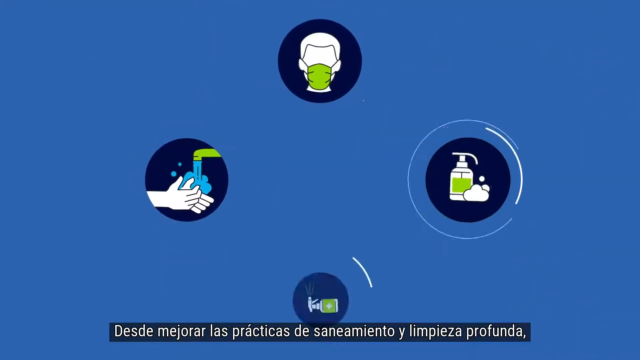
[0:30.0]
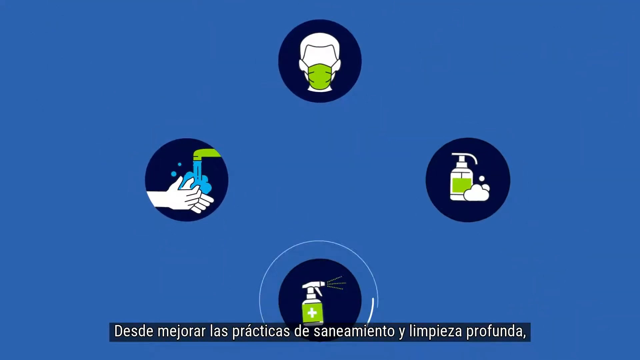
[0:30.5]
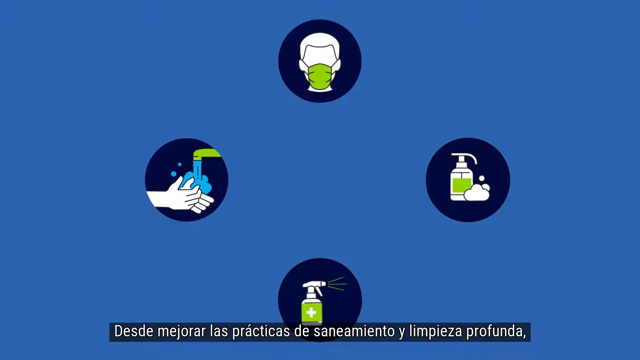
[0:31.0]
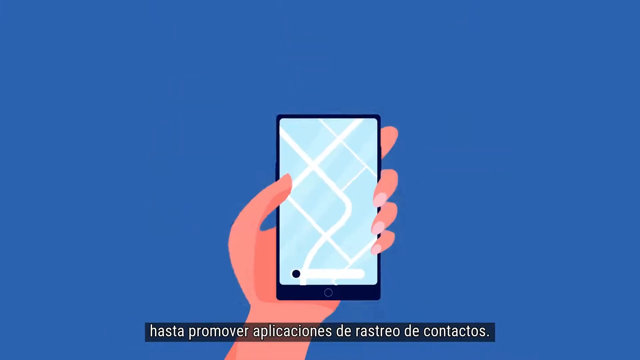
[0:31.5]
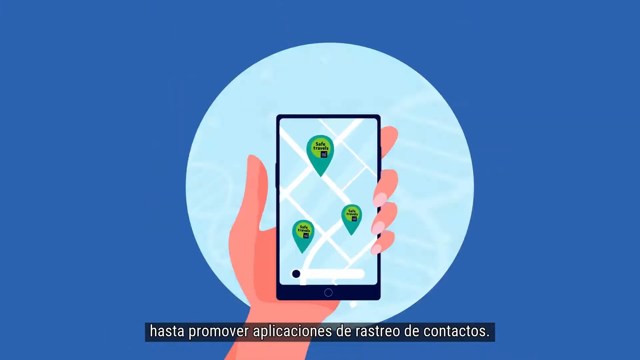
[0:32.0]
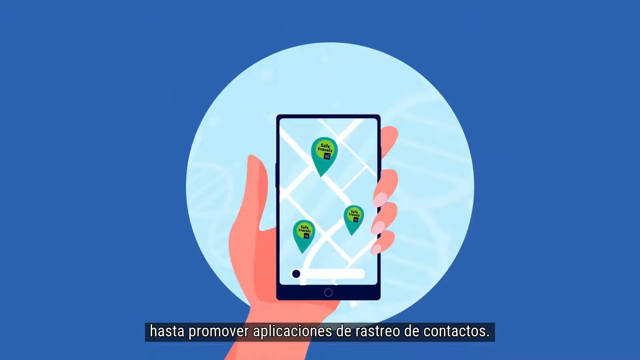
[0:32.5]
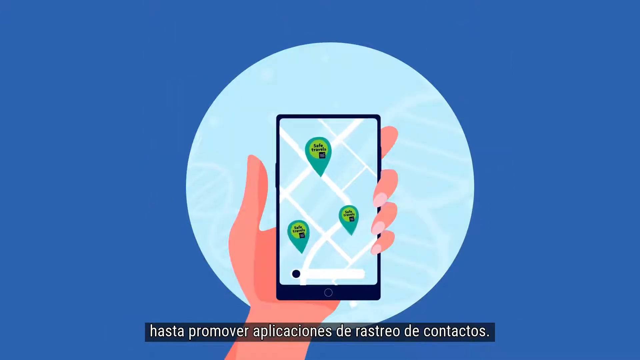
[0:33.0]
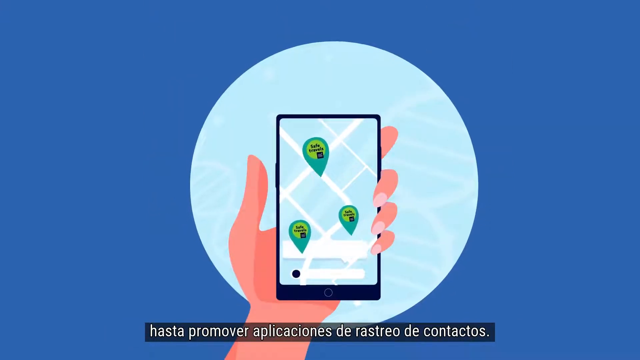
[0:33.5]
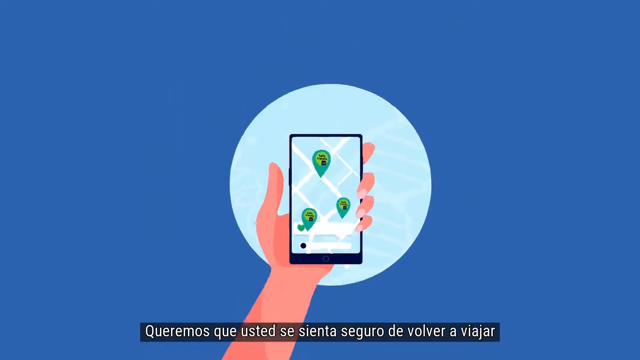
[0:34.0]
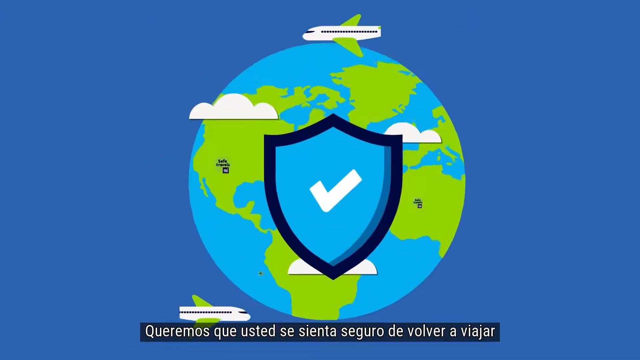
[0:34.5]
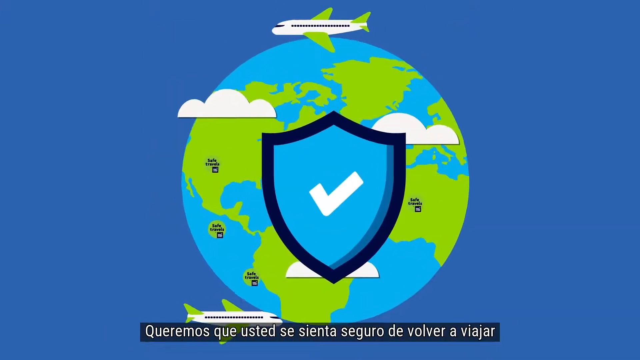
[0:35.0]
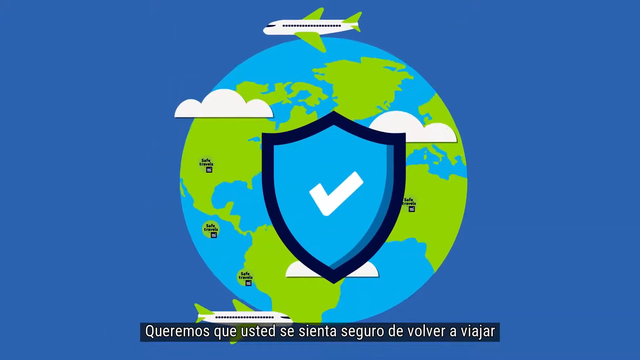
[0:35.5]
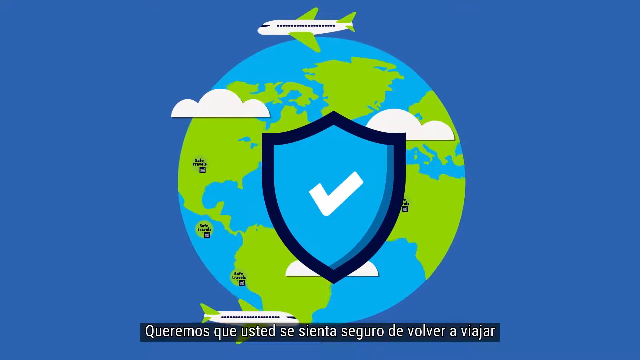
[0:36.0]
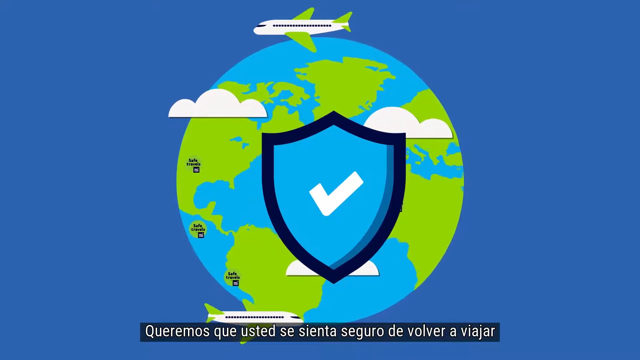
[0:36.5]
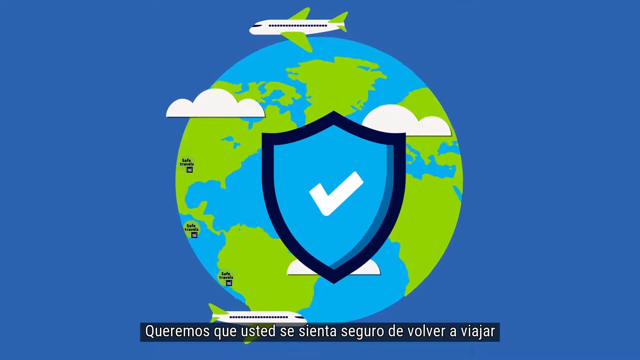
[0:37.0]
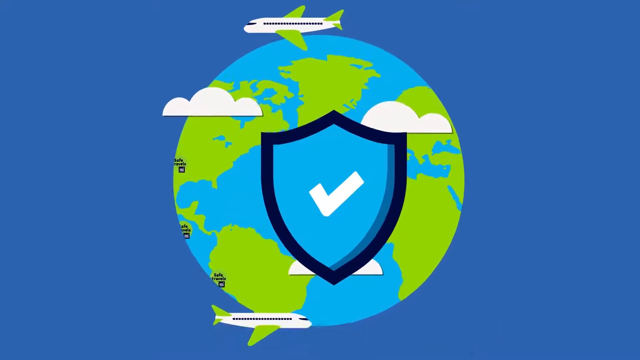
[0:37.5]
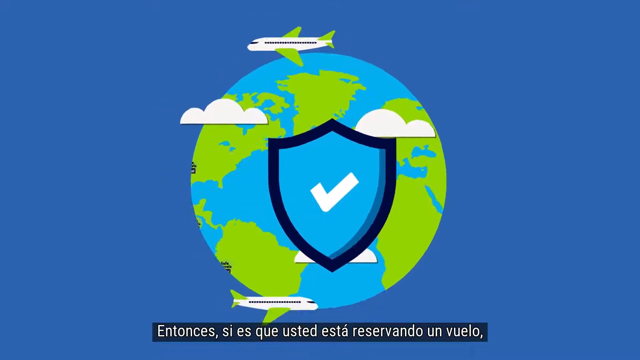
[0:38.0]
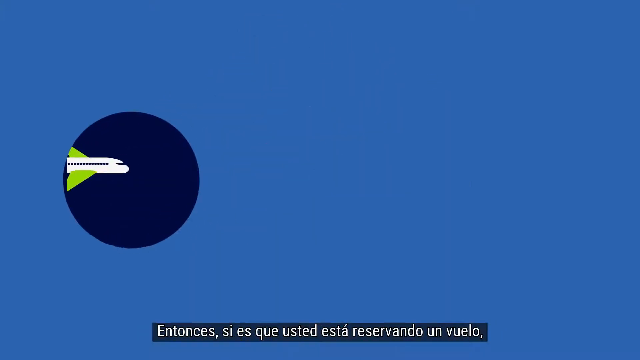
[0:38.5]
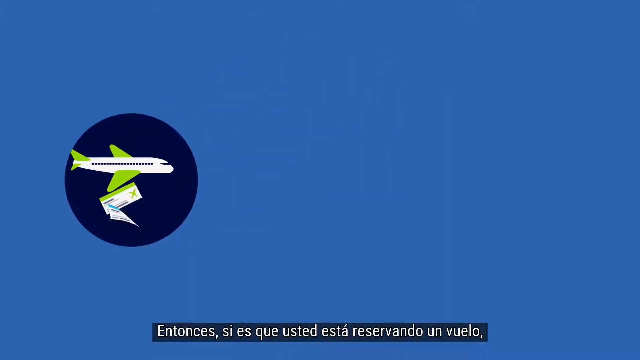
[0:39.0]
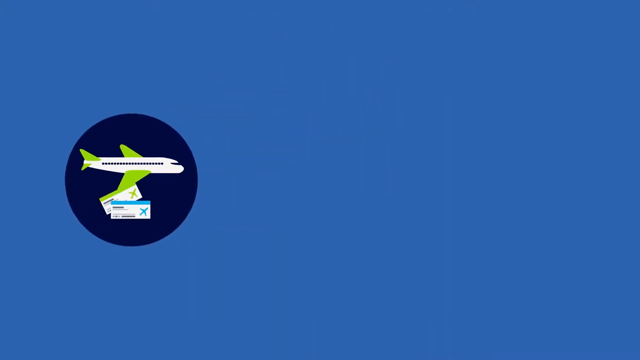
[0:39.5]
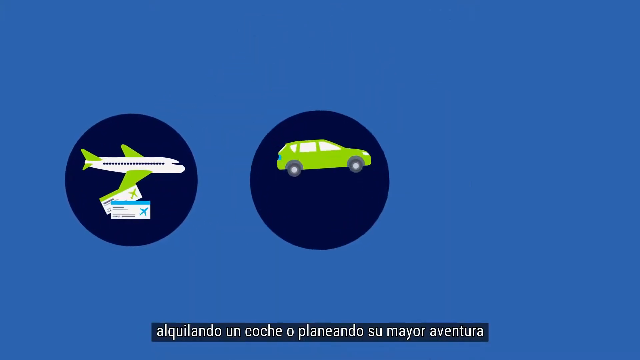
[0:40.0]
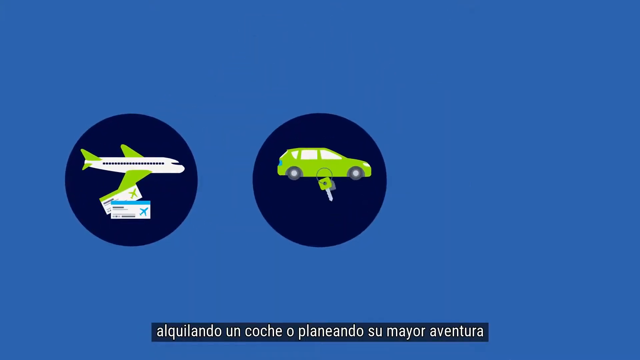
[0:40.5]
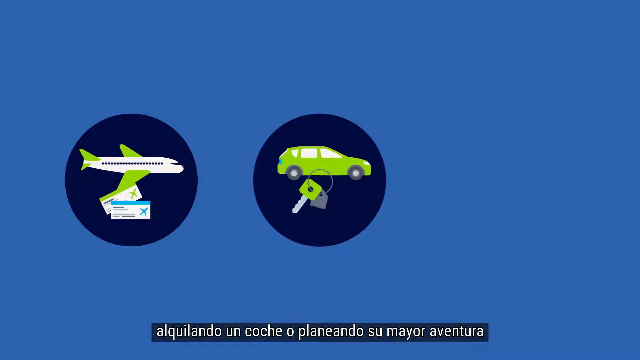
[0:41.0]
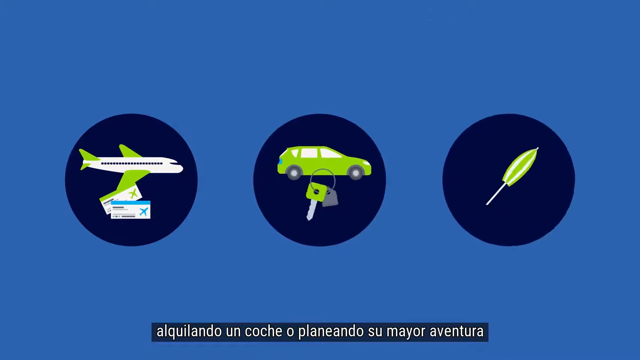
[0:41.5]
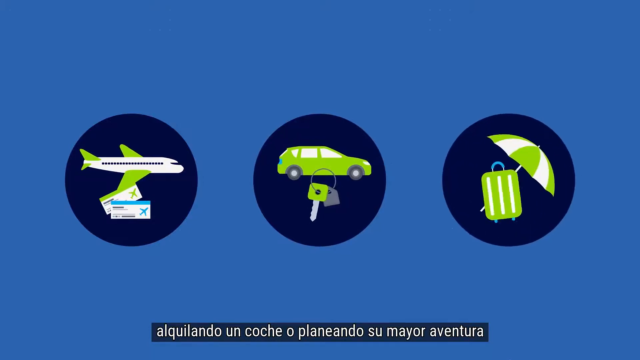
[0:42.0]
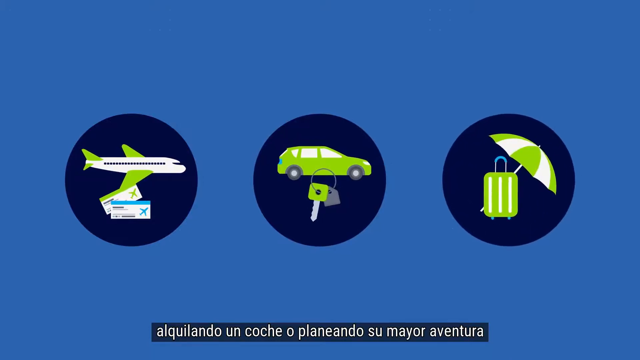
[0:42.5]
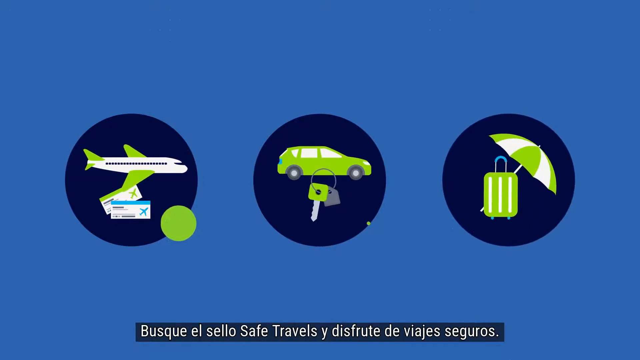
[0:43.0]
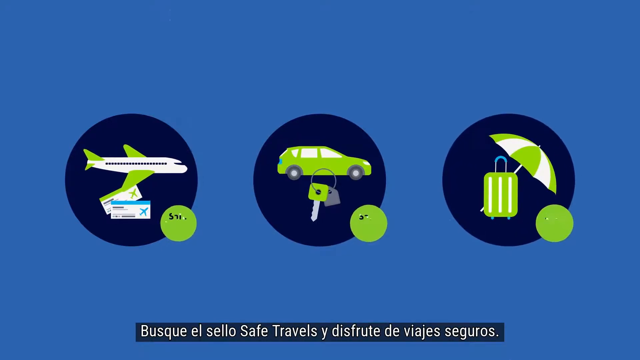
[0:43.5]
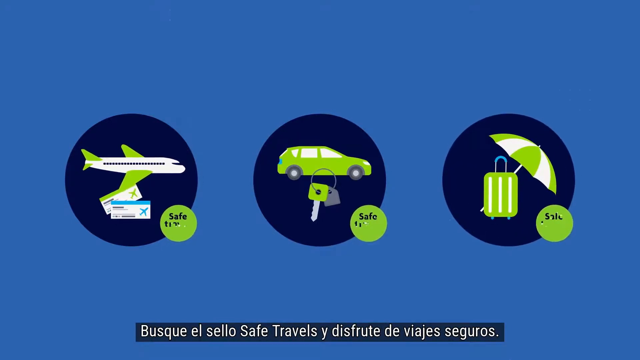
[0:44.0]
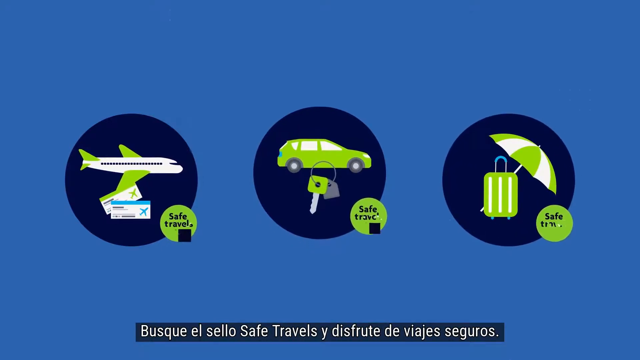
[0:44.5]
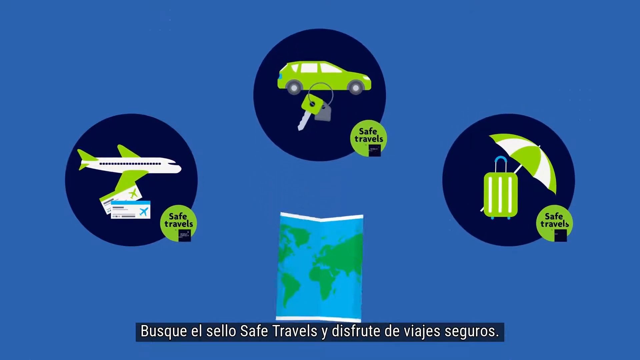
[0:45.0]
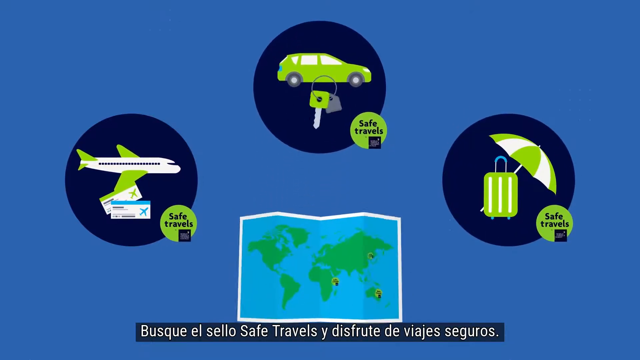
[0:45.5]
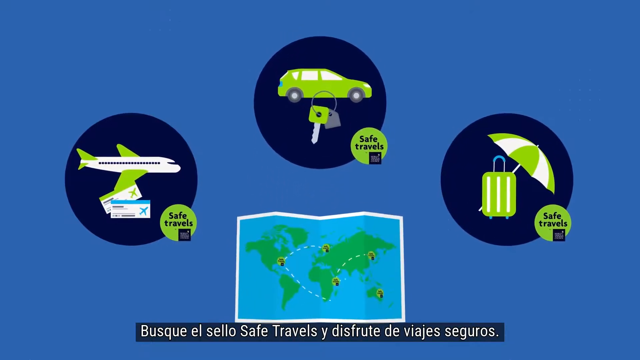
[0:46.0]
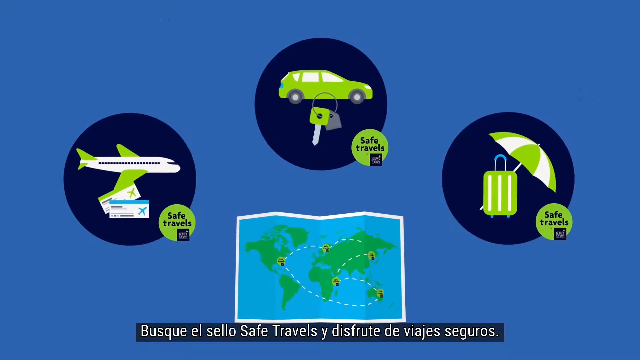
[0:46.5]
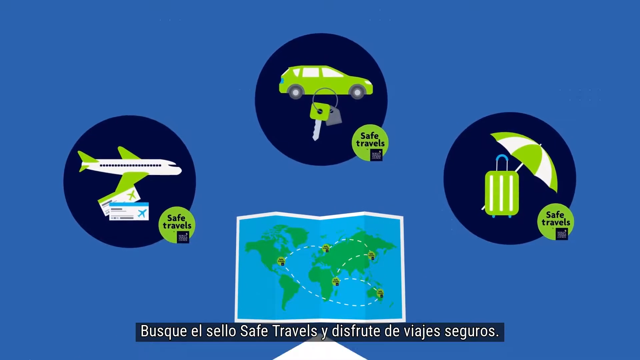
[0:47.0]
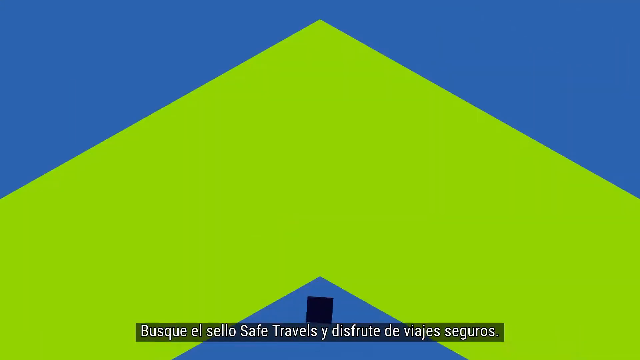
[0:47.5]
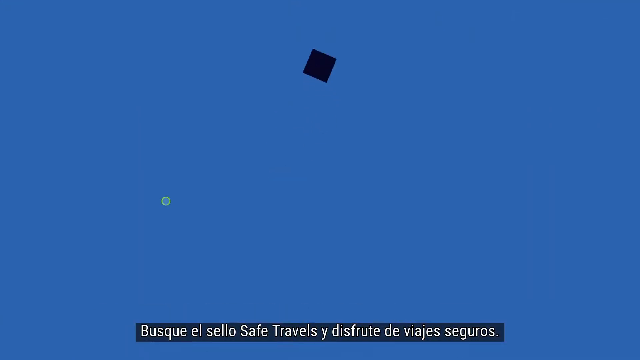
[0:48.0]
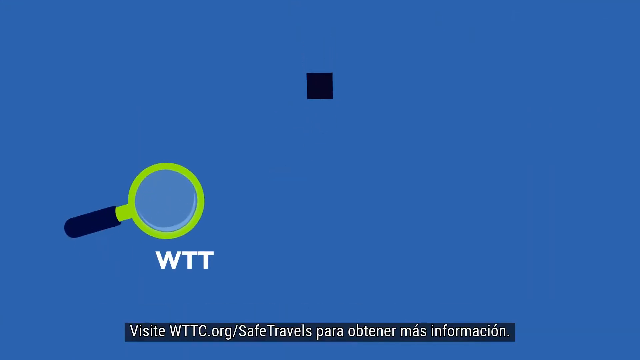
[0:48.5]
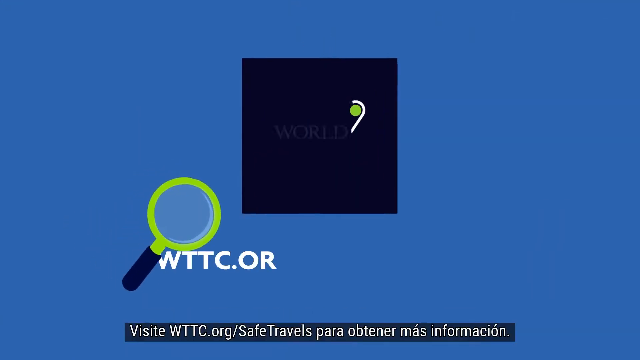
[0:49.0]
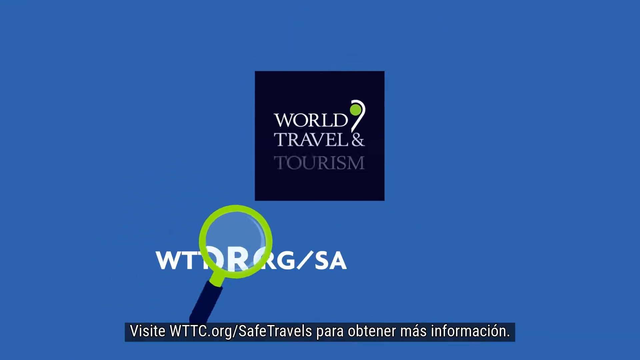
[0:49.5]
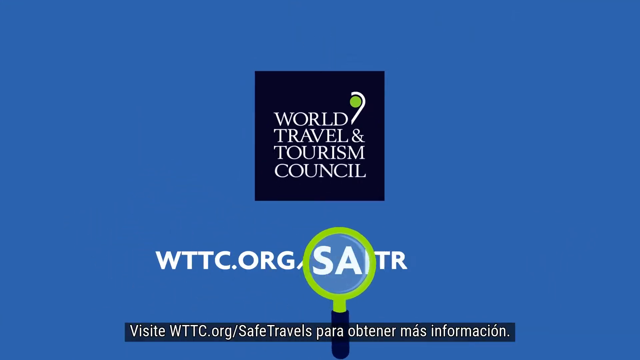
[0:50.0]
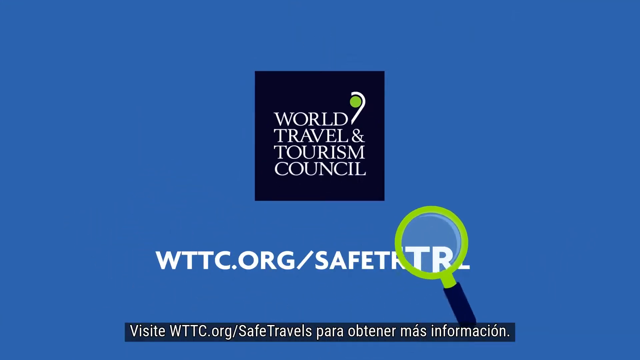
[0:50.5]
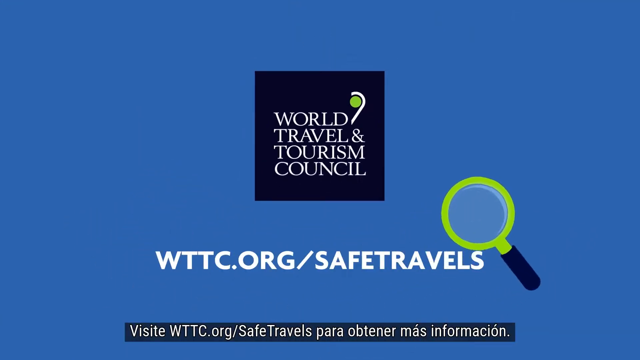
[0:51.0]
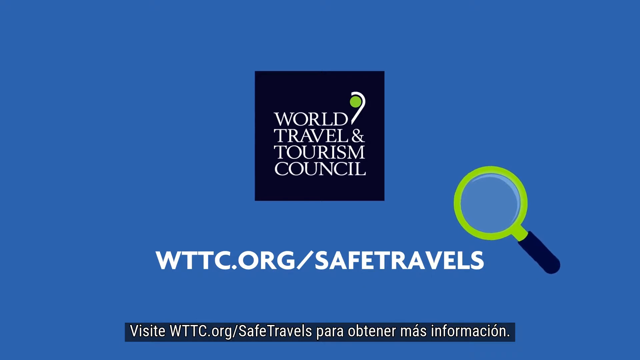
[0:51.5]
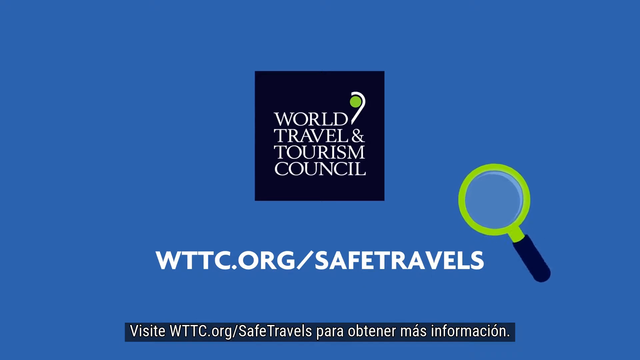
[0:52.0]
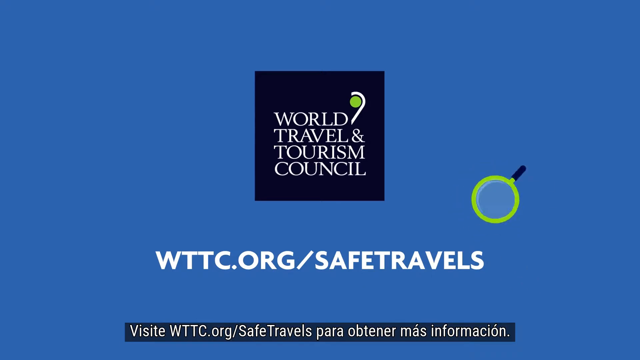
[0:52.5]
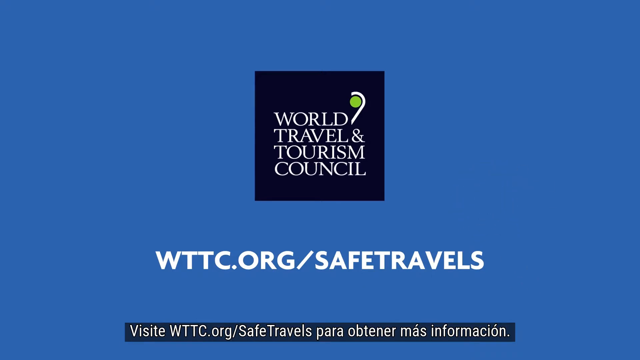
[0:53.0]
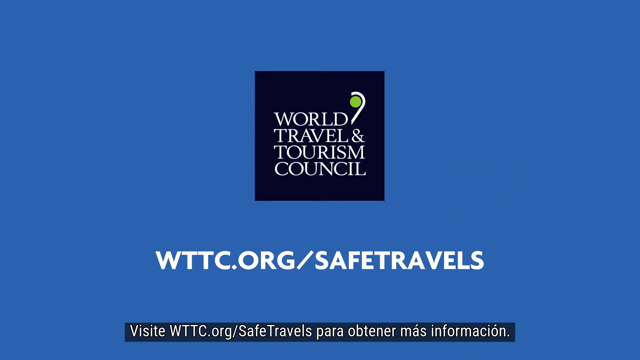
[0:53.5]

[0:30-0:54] Four icons appear: hands being cleaned in water, a man wearing a medical mask, apparently for protection from COVID-19, an antibacterial liquid with foam, and an antibacterial medical spray that is spraying. The next slide shows a hand holding a mobile phone with the locations of Safe Travels, possibly shown as points. Another slide shows a blue background and the world with airplanes and a shield. Then an airplane with tickets, a car with a key, and travel baggage with an umbrella appear. Again, Safe Travels is shown located around the world. The last slide shows the World Travel and Tourism Council logo and the website "www.wttc.org/safetravels".